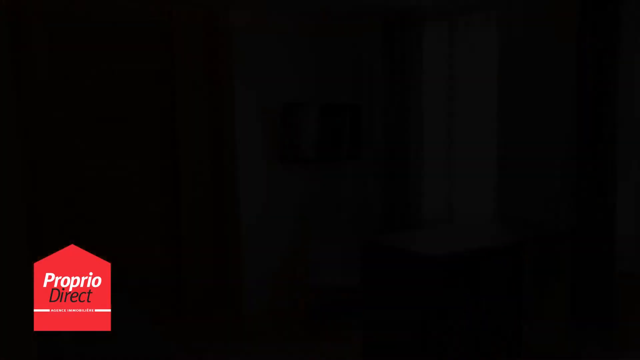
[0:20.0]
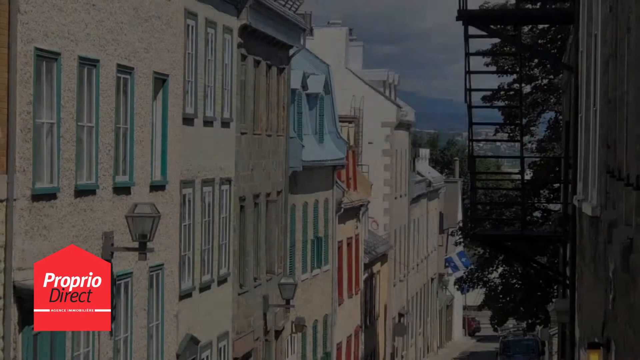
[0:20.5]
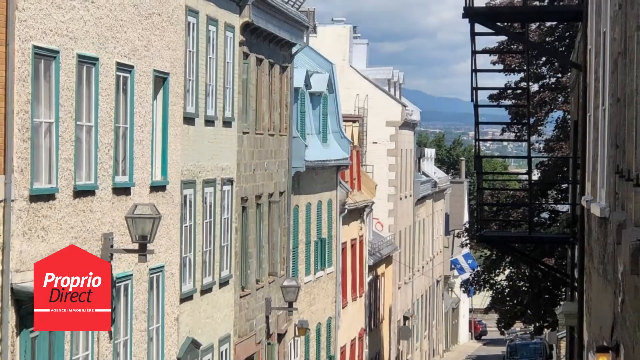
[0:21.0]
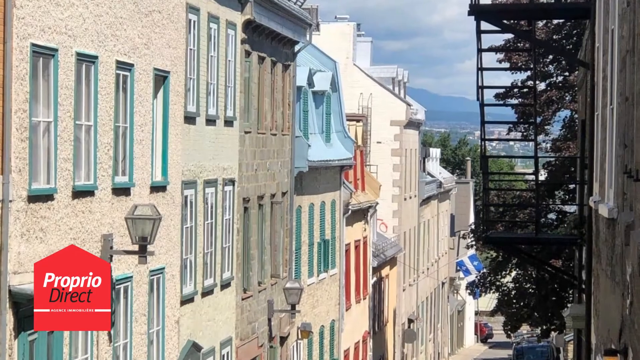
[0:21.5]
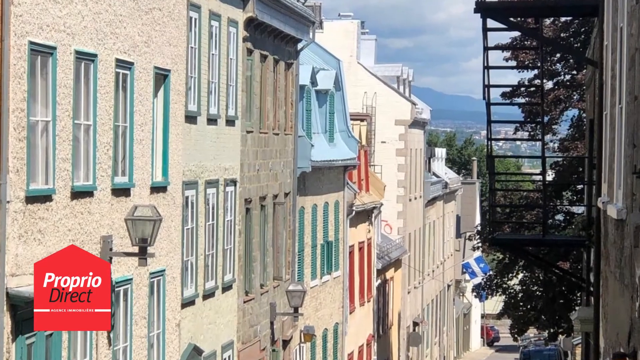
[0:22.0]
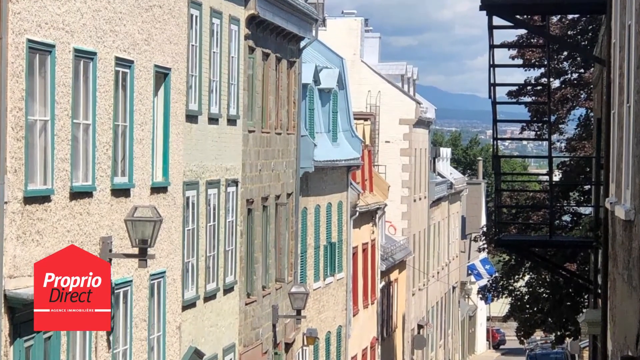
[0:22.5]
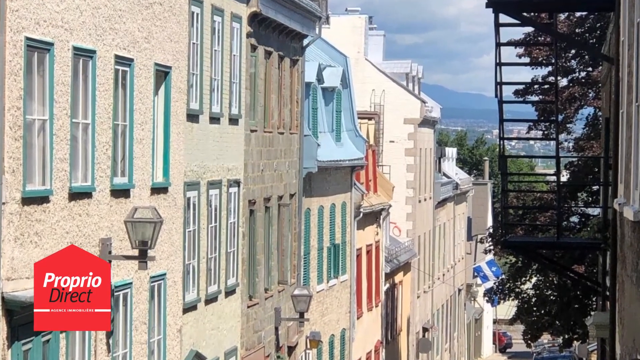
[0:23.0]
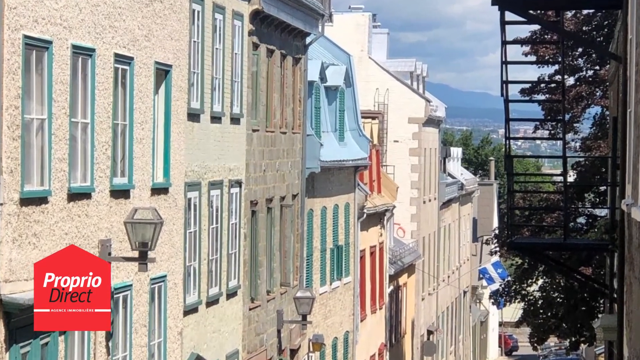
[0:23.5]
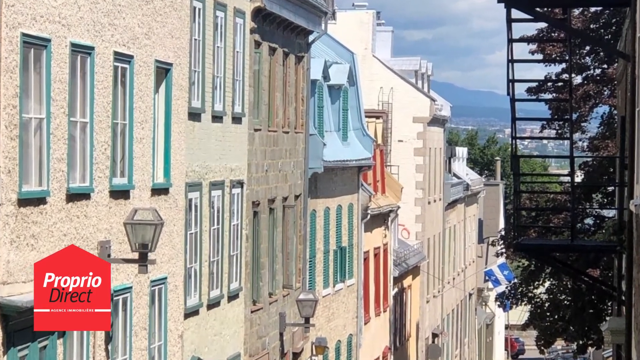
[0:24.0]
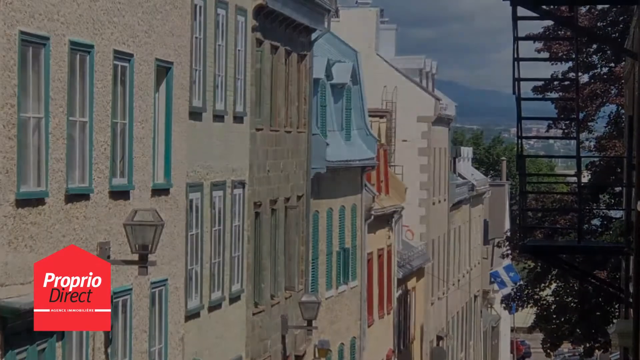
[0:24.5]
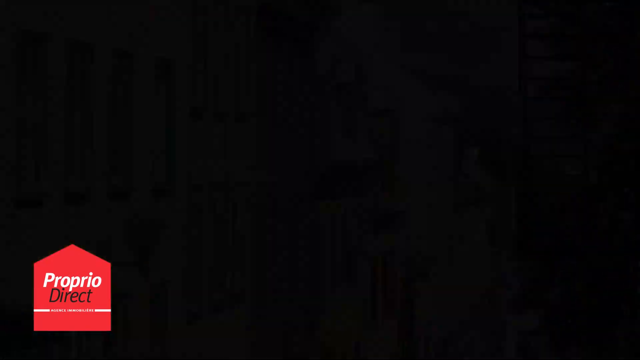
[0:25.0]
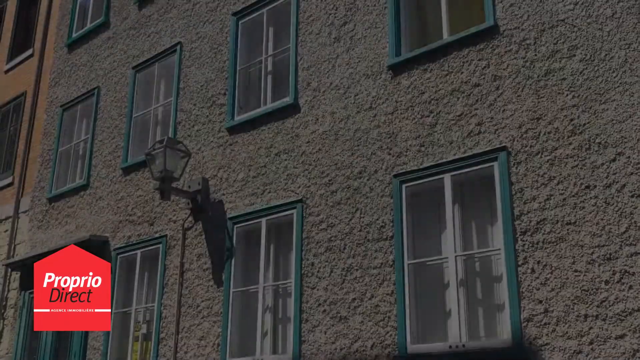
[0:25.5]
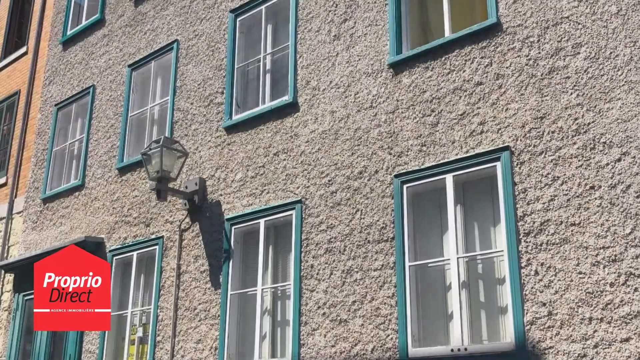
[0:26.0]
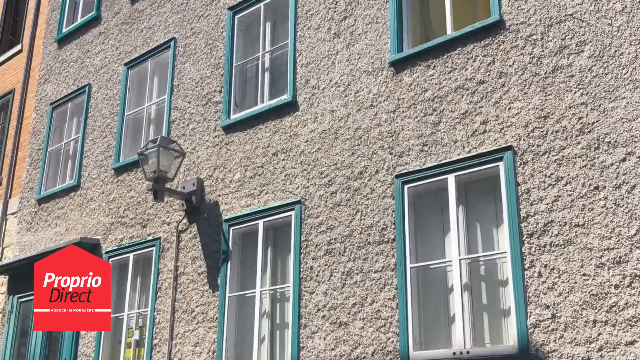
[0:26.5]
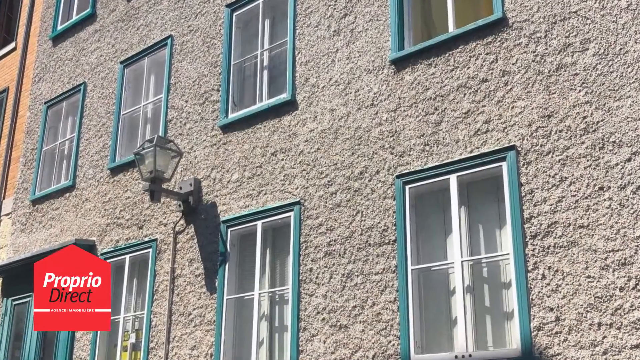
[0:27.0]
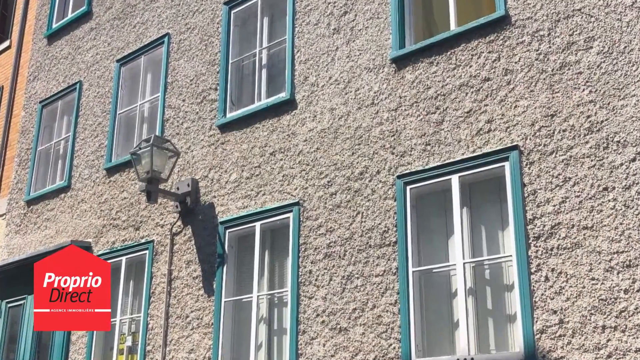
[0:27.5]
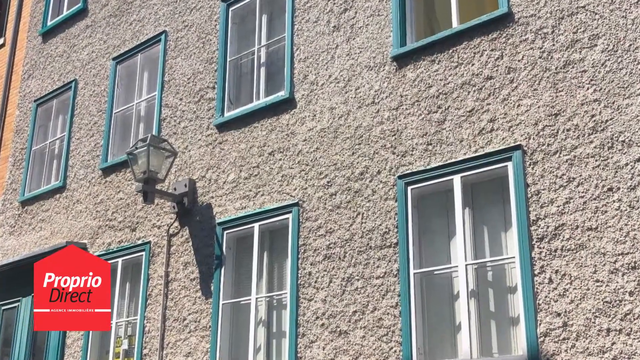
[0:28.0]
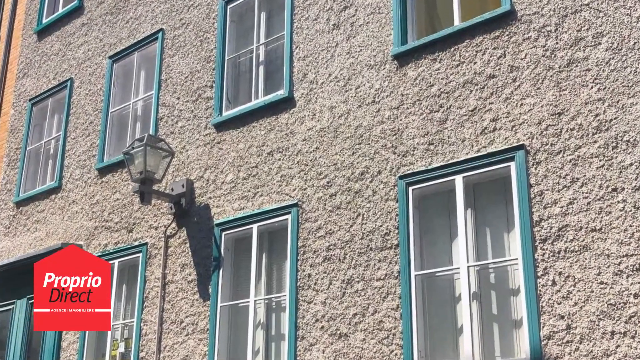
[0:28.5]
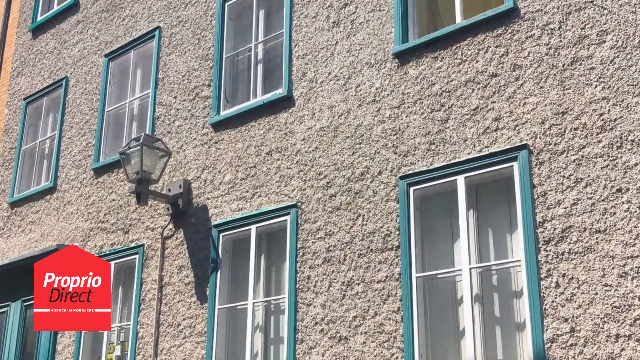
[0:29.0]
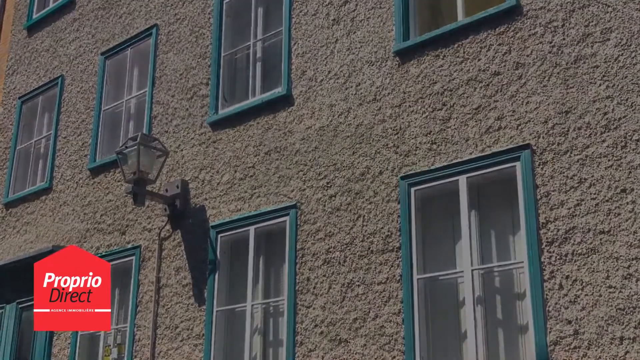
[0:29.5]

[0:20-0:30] A glimpse of a city shows a few houses all attached to each other, sharing walls, with sets of windows in various colors: green, gray and red. One house has a blue roof. On the right side, emergency stairs come down from a building. A tree is in the background, and further away is another part of the city, with perhaps some mountains, under a cloudy sky. The view slowly zooms in and then fades out. A specific house appears, with a gray wall and green-framed windows with white interiors, and the view zooms in again. The PropViewDirect logo remains in the bottom left corner the whole time.